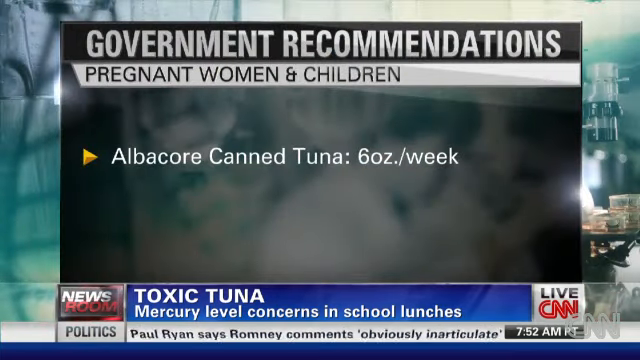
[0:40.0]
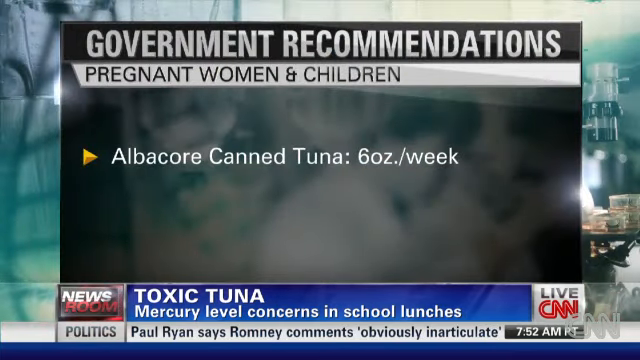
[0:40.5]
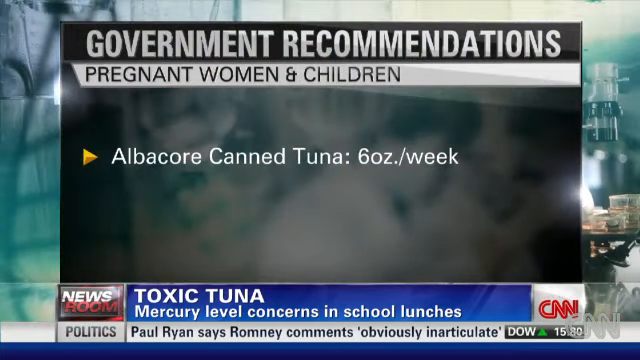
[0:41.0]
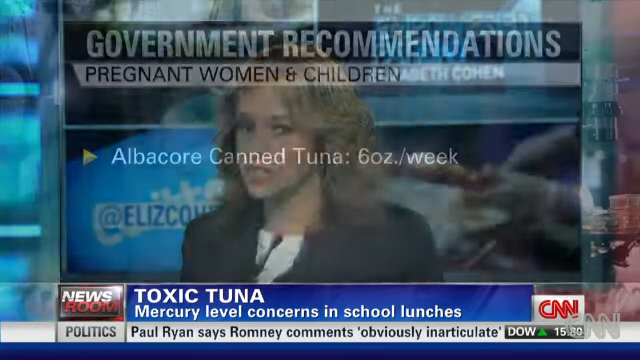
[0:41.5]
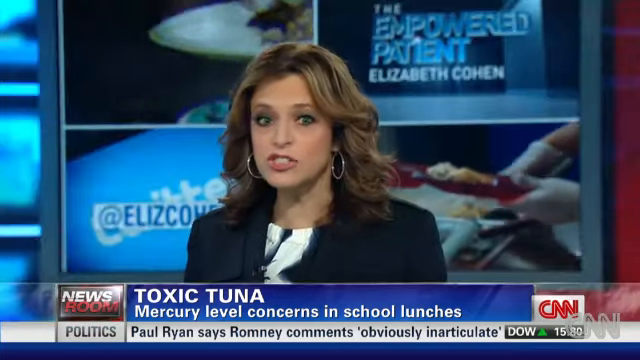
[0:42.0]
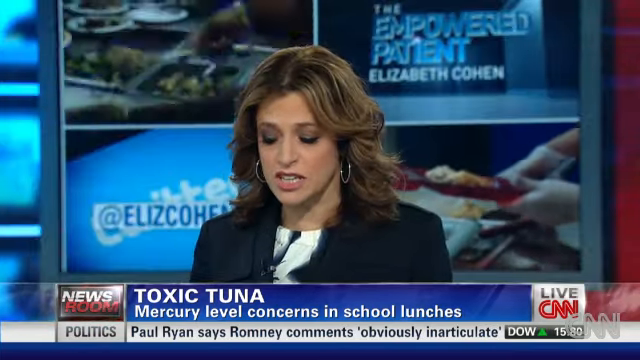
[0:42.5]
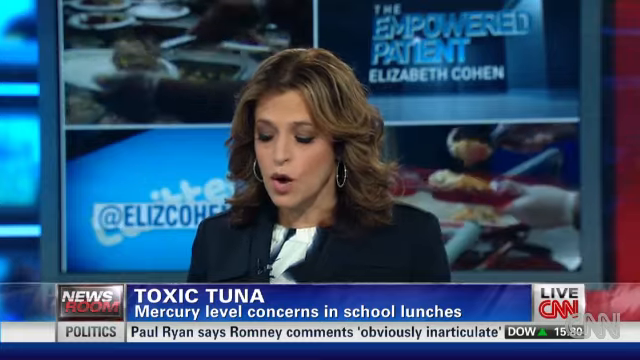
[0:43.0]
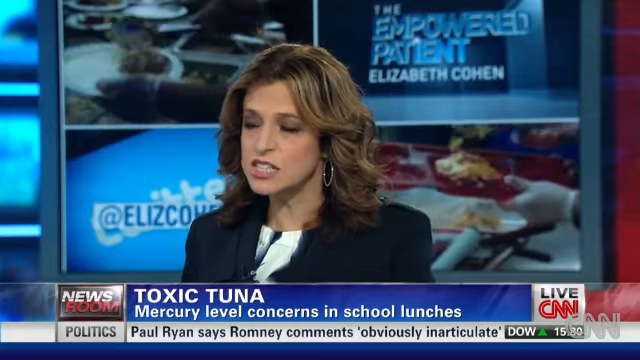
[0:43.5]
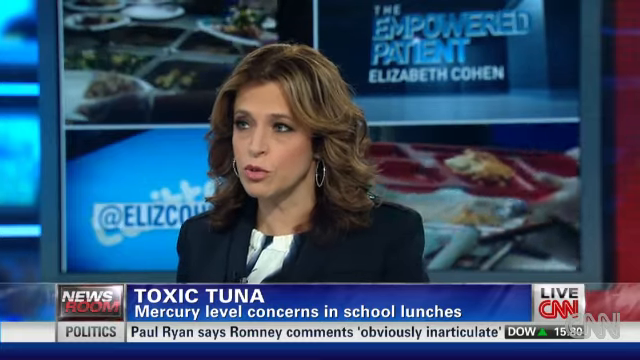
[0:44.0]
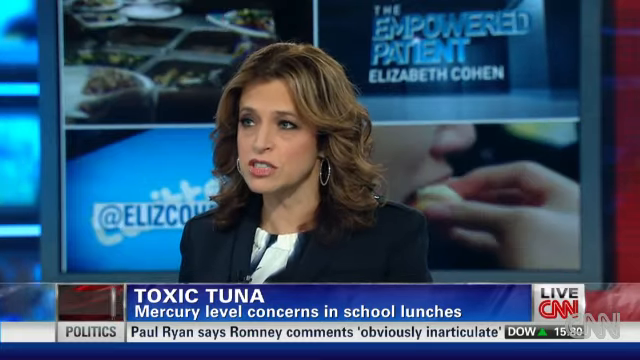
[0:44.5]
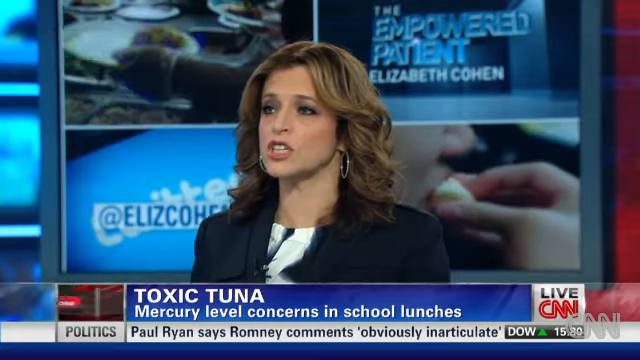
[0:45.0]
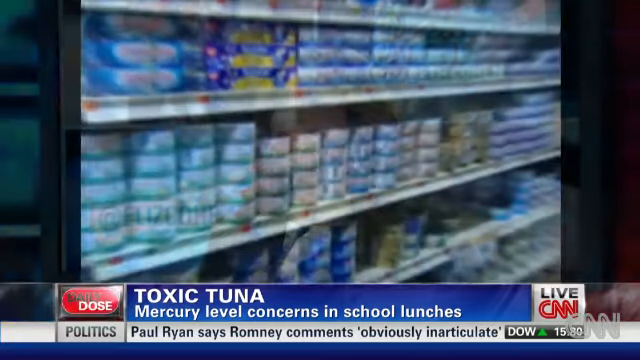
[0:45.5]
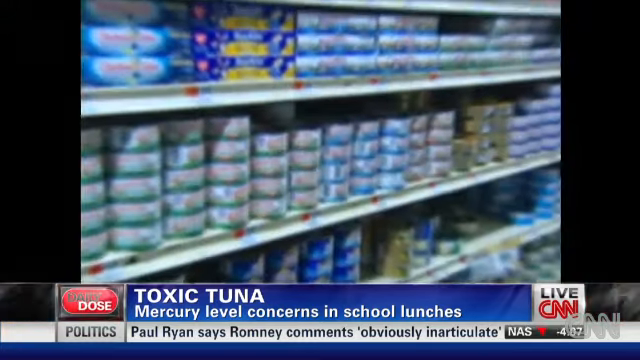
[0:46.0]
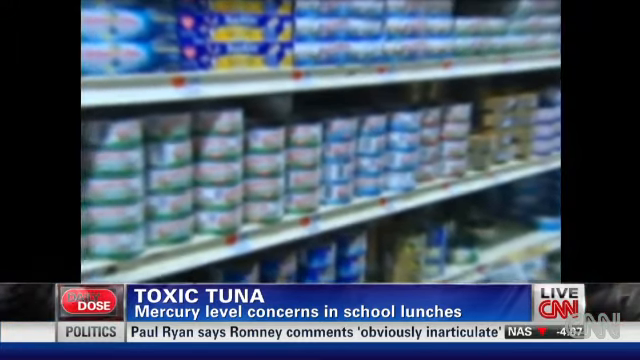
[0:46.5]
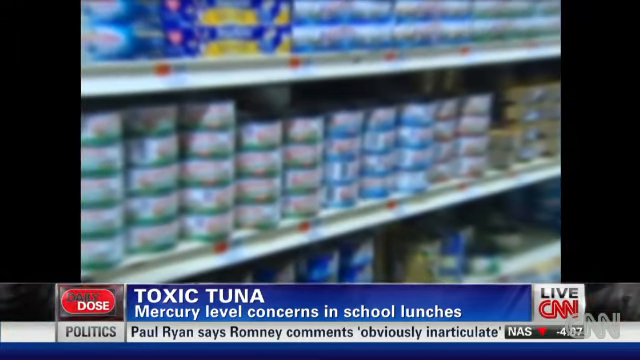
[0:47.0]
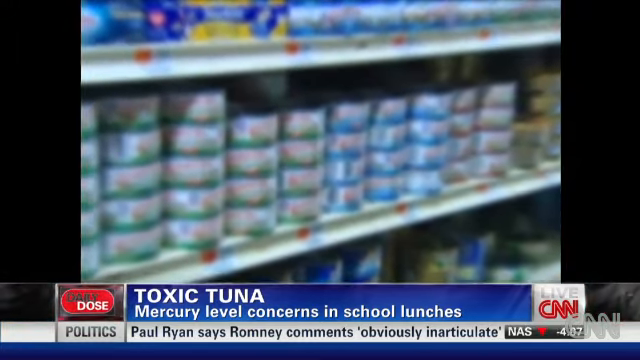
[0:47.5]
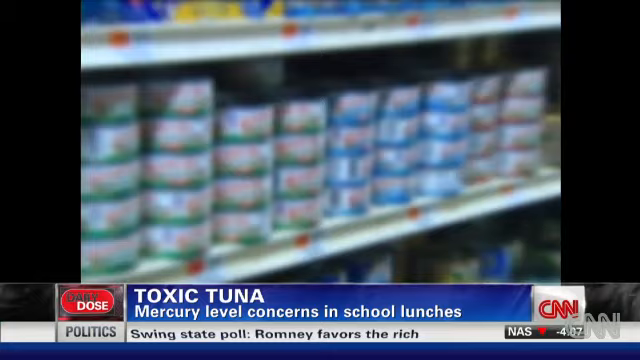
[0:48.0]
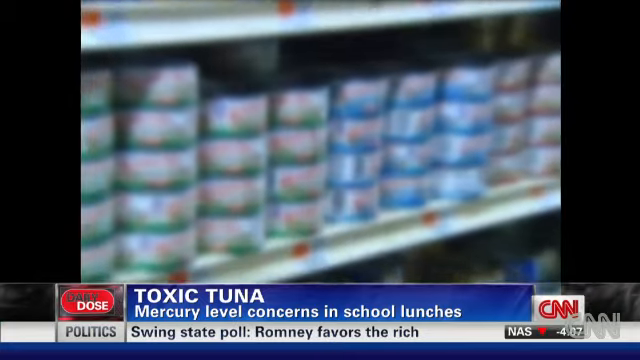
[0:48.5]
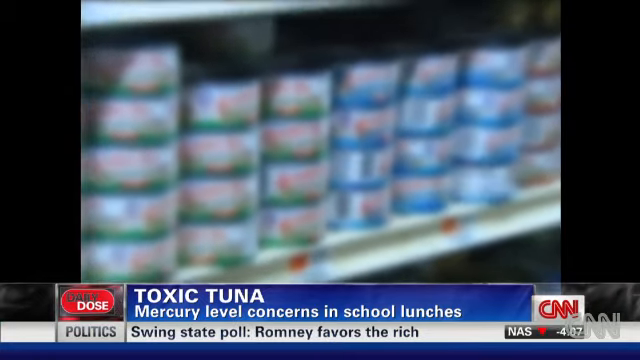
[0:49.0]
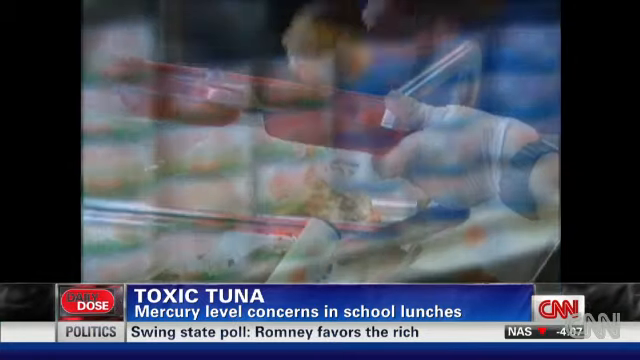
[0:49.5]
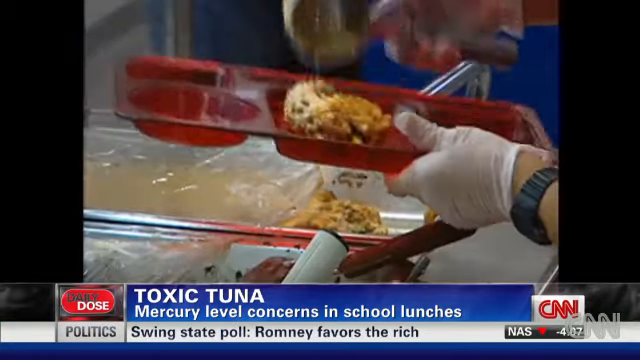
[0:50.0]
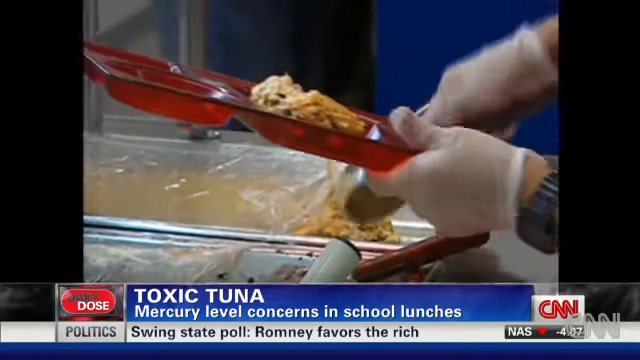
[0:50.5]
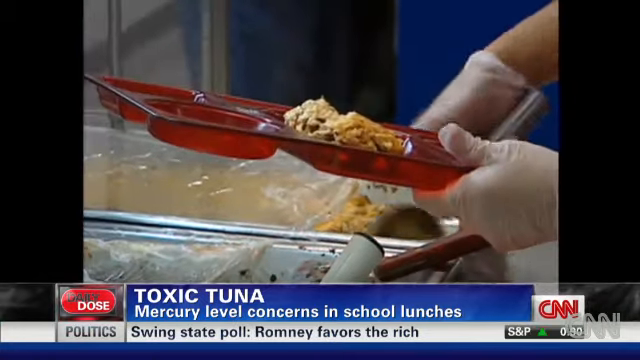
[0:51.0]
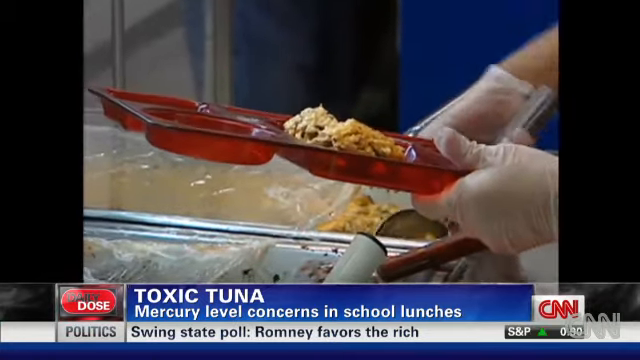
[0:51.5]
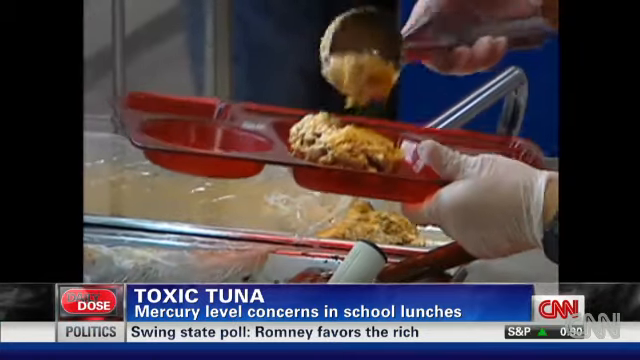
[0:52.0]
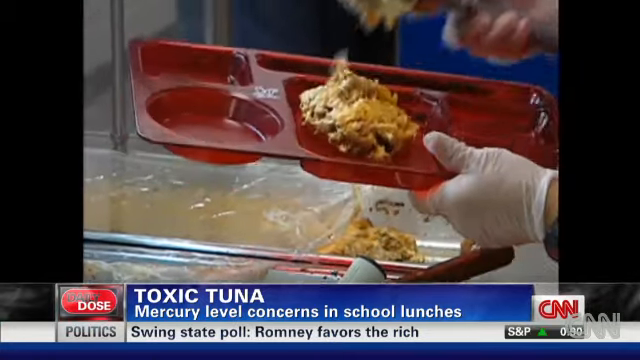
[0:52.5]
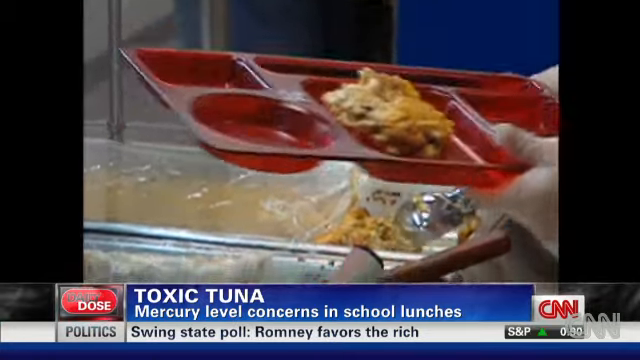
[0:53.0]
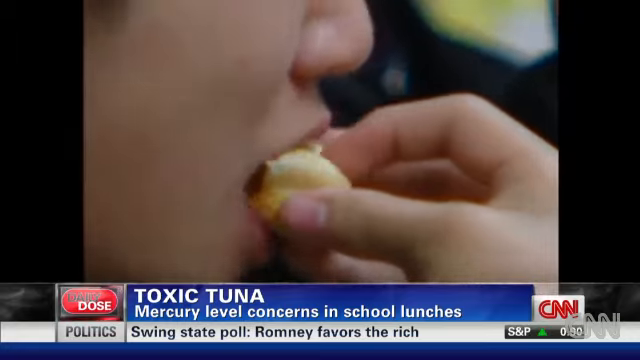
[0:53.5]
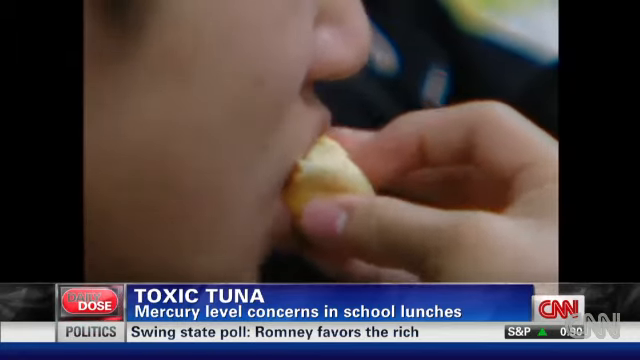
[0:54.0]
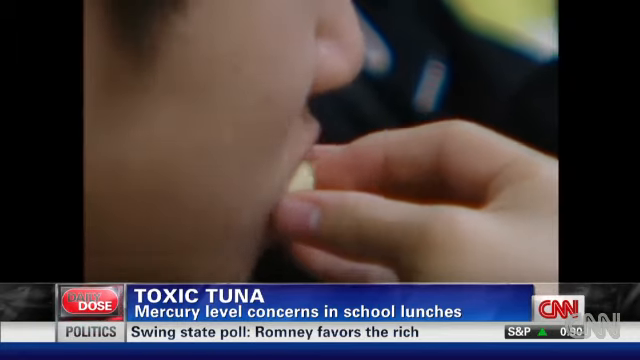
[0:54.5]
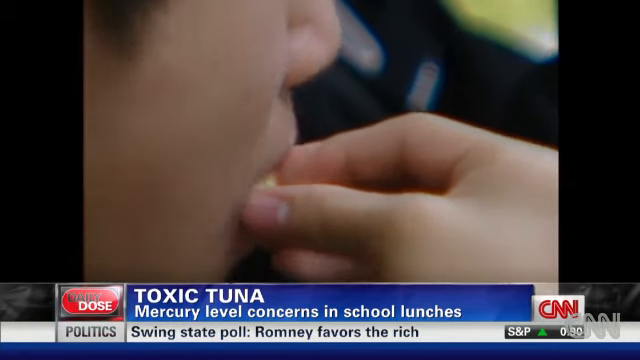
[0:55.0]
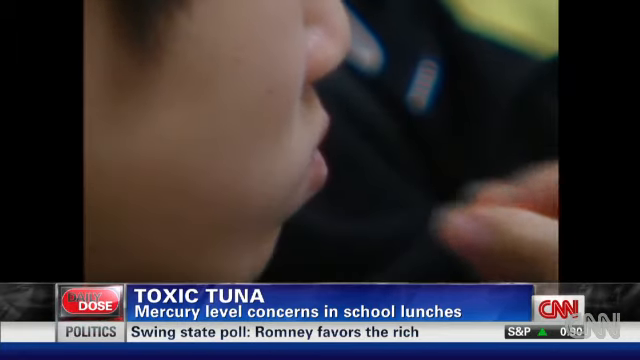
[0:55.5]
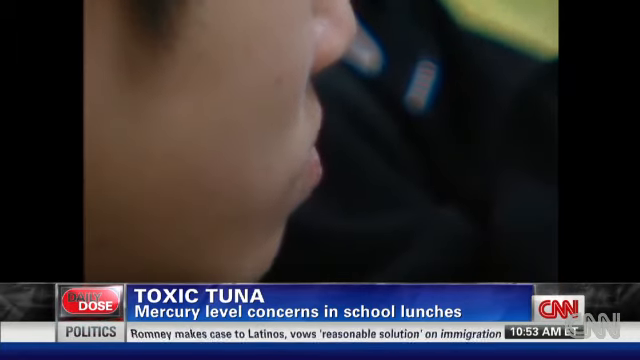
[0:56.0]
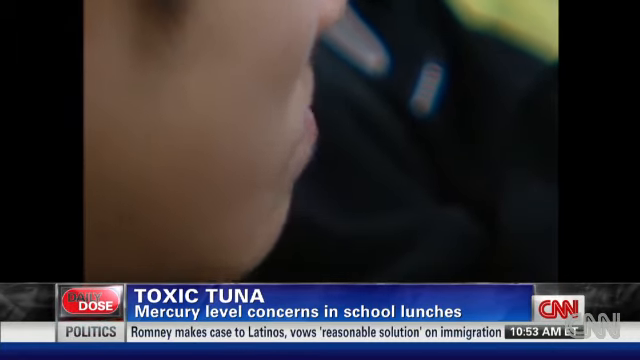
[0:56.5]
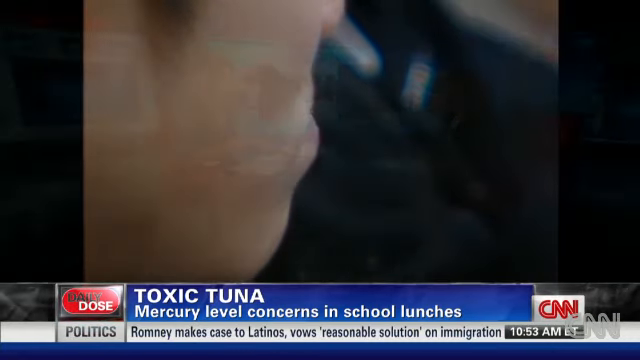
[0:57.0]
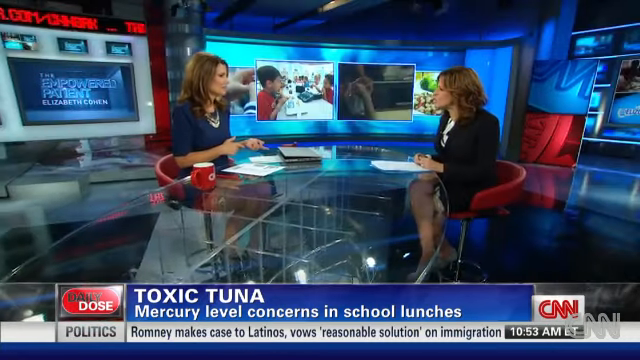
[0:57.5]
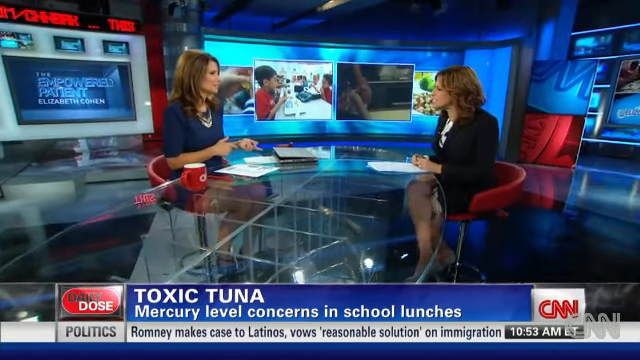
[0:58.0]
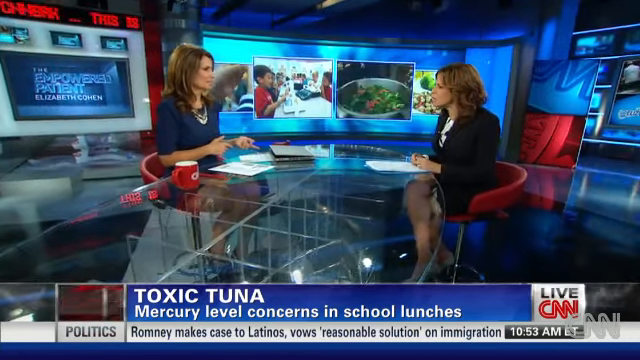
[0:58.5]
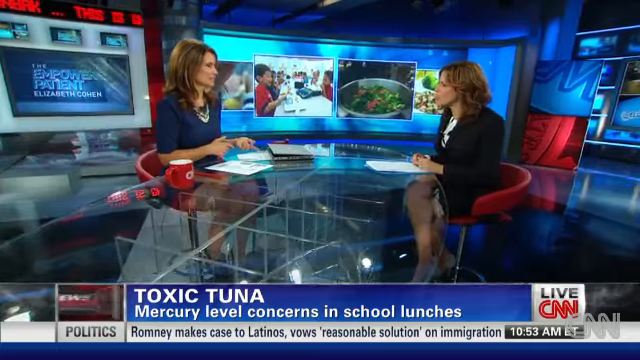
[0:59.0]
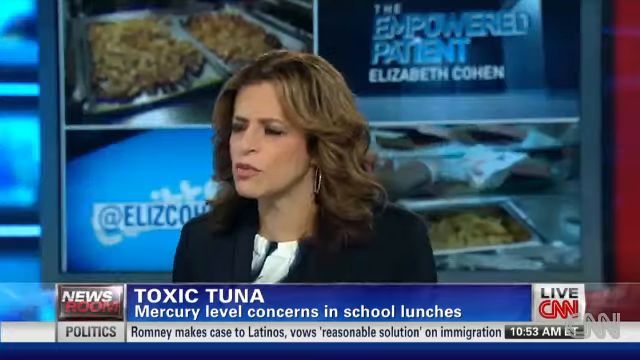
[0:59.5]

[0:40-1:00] The government recommendations for women and children appear, and the screen seems very busy. A white screen shows "albacore canned tuna six ounce / week". The ticker says "paul ryan says romney comments" and then "swing state says romney favors". "Toxic tuna" appears, and people are shown eating a lot of tuna. There are some microscopes in the back.